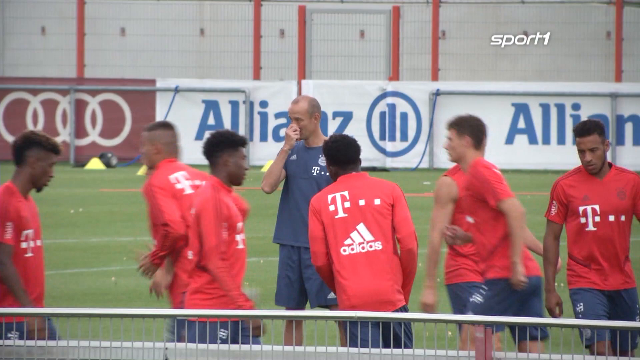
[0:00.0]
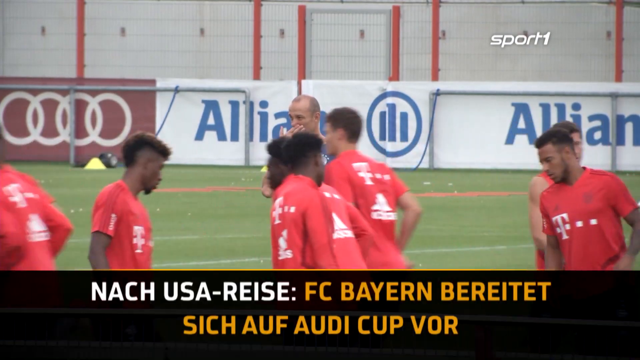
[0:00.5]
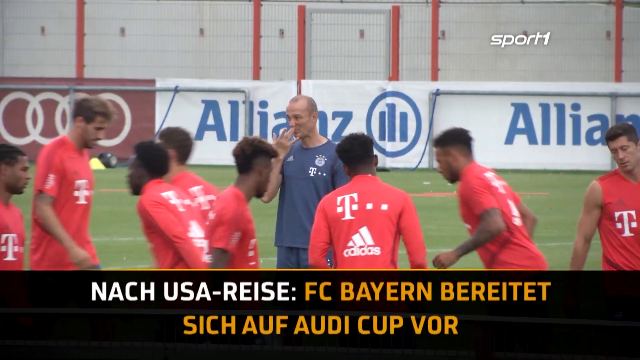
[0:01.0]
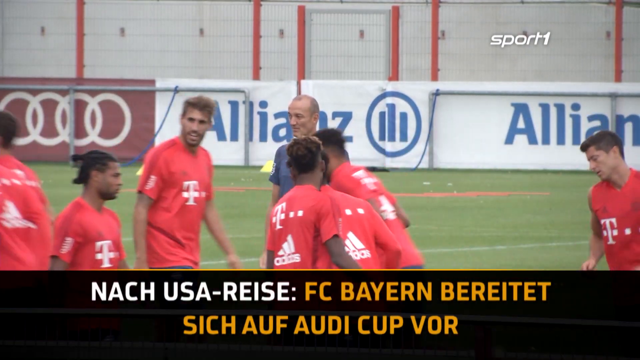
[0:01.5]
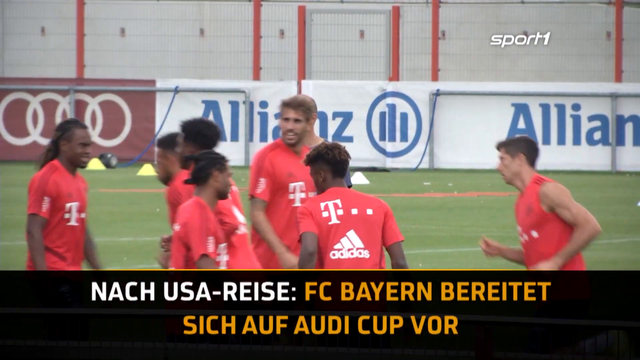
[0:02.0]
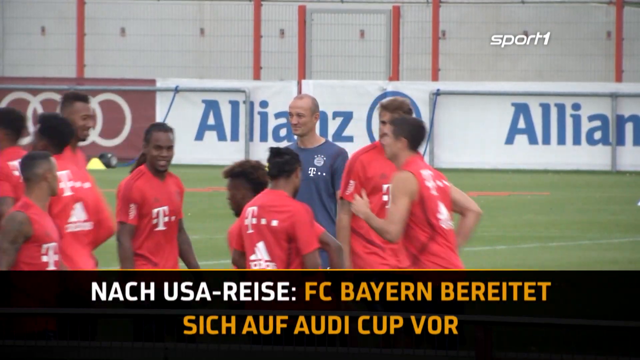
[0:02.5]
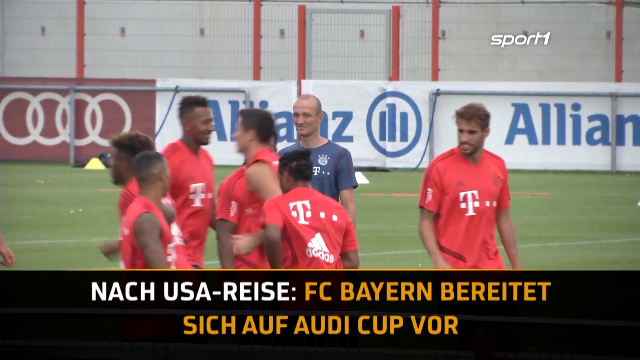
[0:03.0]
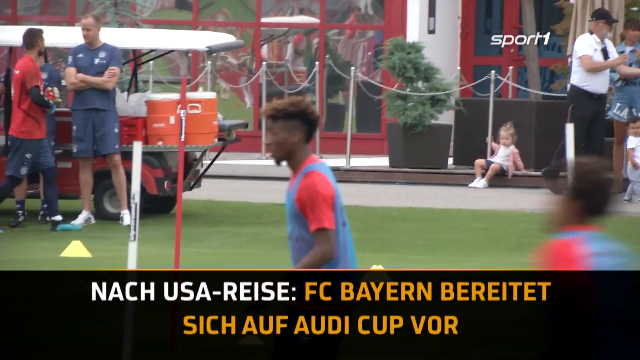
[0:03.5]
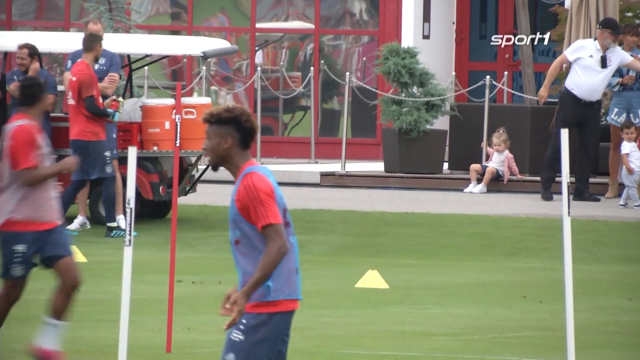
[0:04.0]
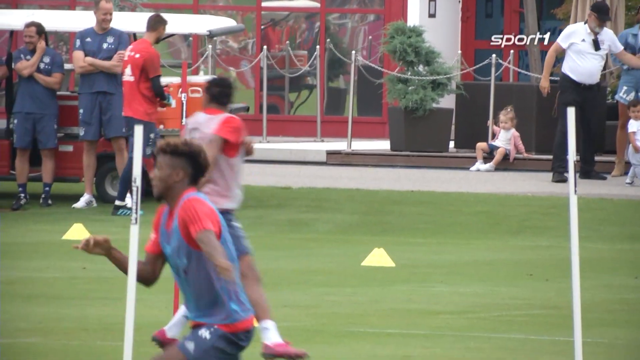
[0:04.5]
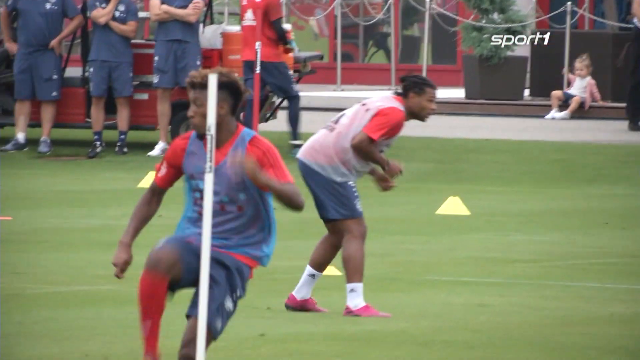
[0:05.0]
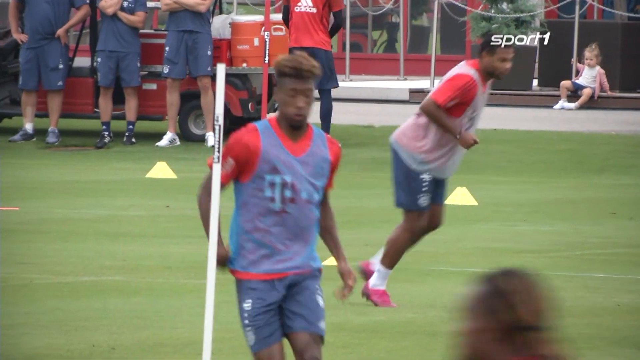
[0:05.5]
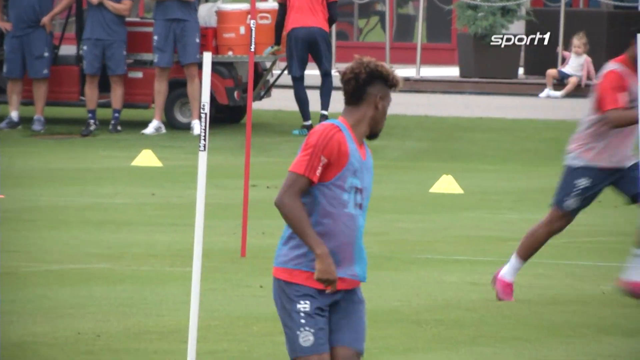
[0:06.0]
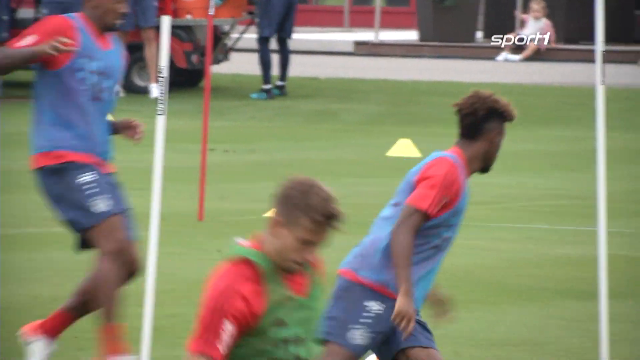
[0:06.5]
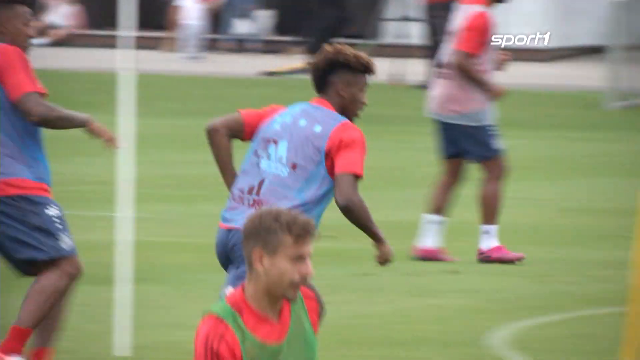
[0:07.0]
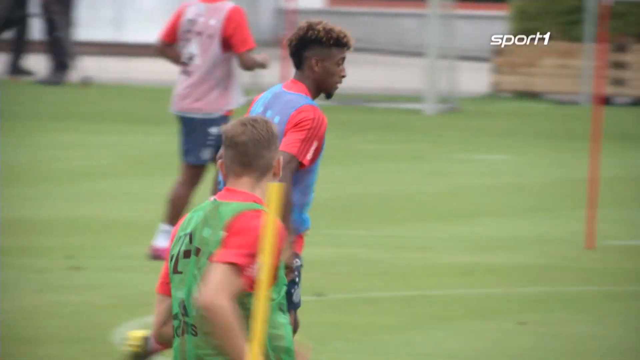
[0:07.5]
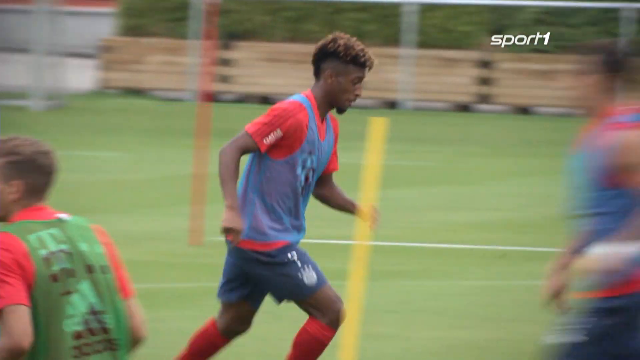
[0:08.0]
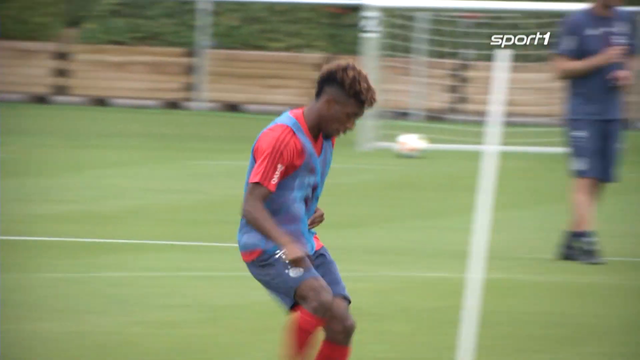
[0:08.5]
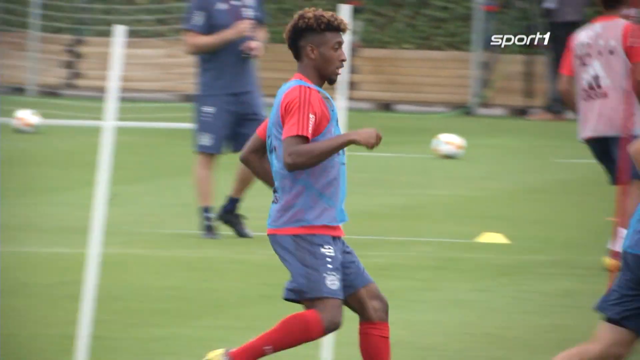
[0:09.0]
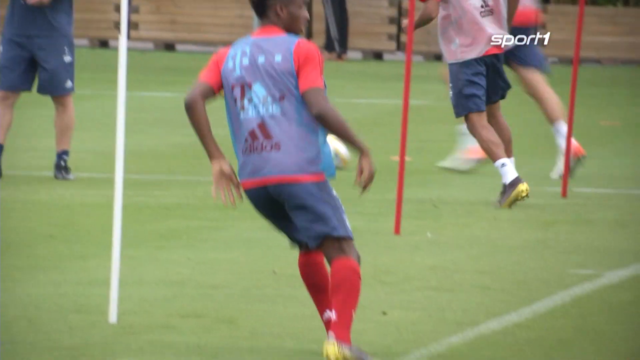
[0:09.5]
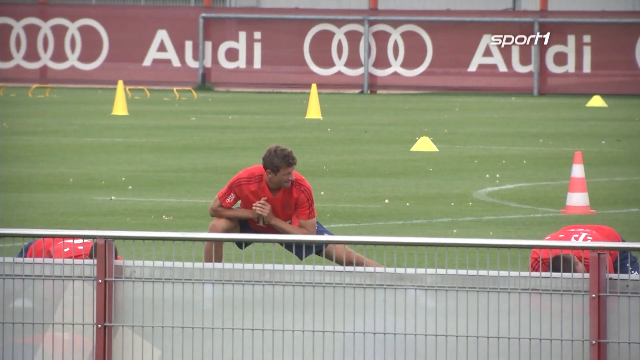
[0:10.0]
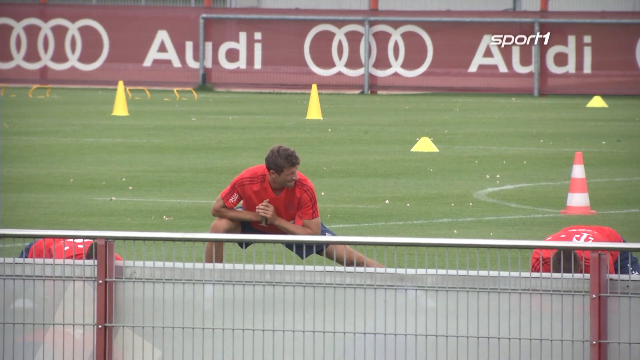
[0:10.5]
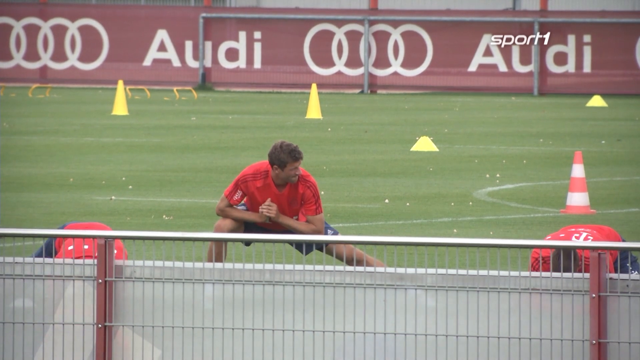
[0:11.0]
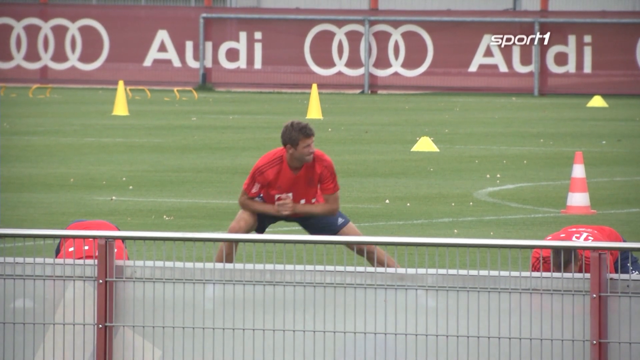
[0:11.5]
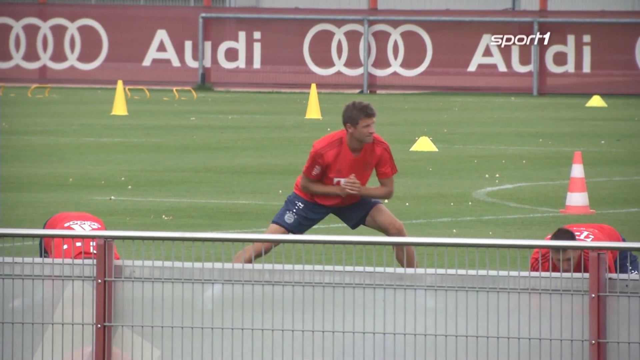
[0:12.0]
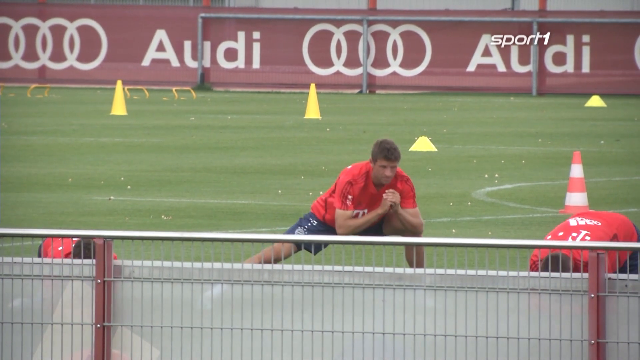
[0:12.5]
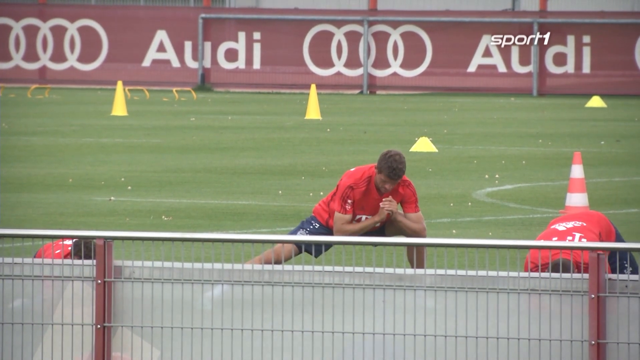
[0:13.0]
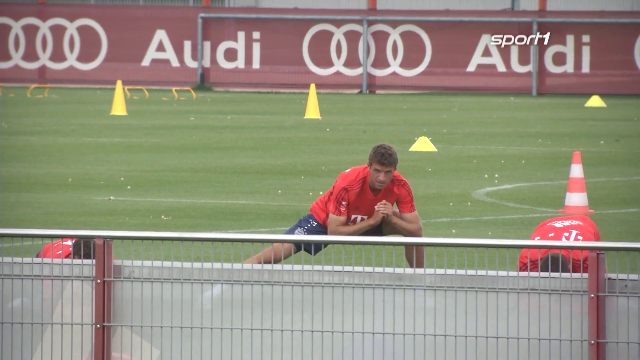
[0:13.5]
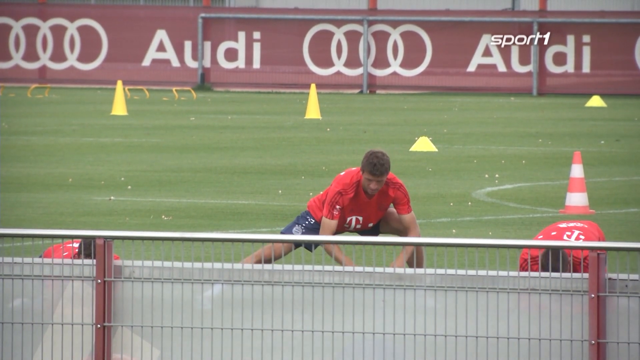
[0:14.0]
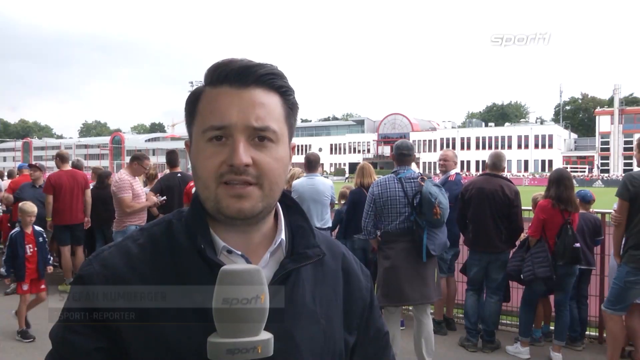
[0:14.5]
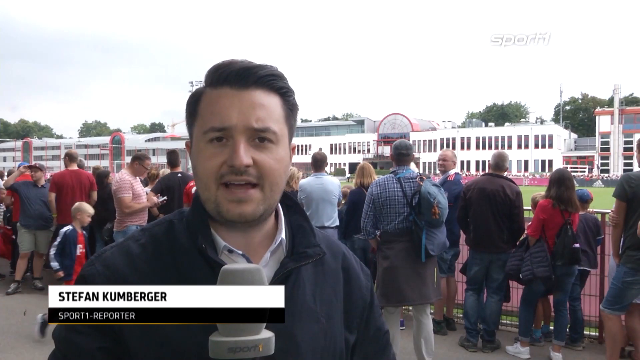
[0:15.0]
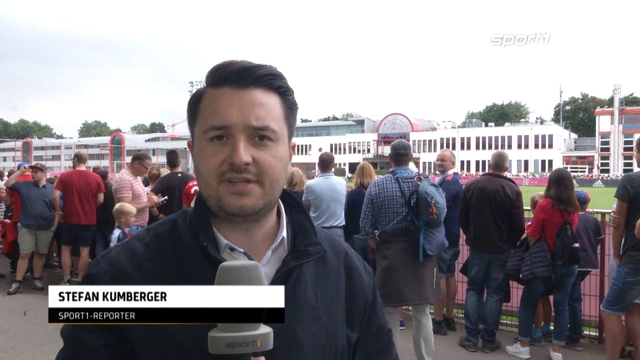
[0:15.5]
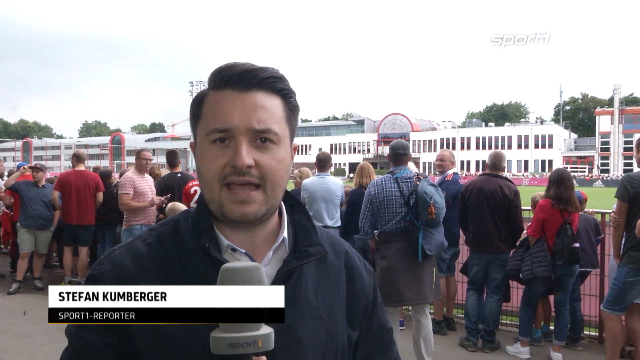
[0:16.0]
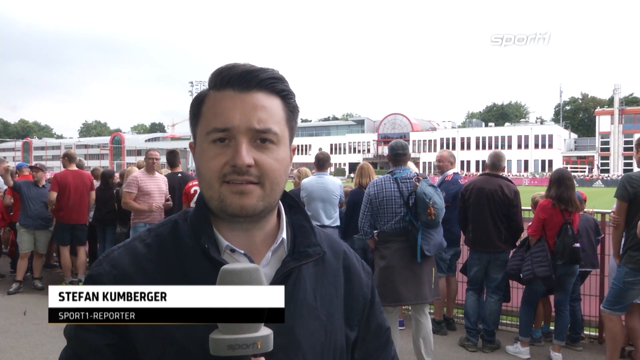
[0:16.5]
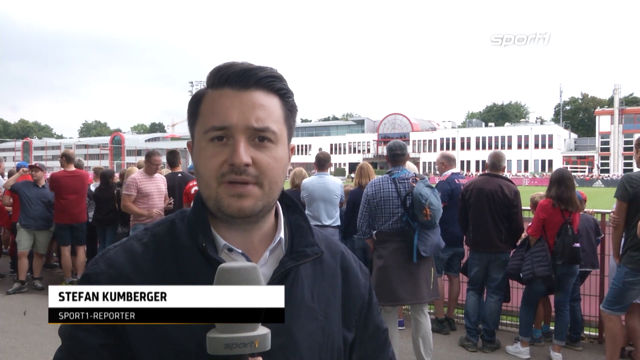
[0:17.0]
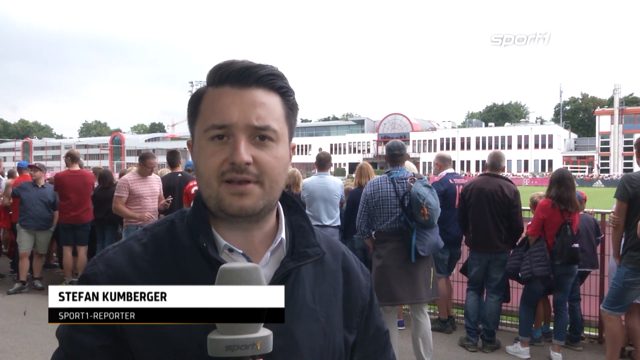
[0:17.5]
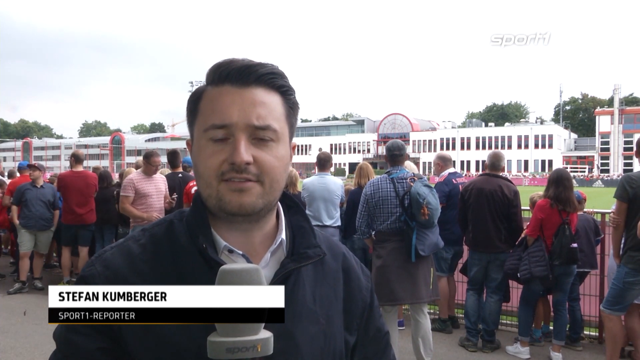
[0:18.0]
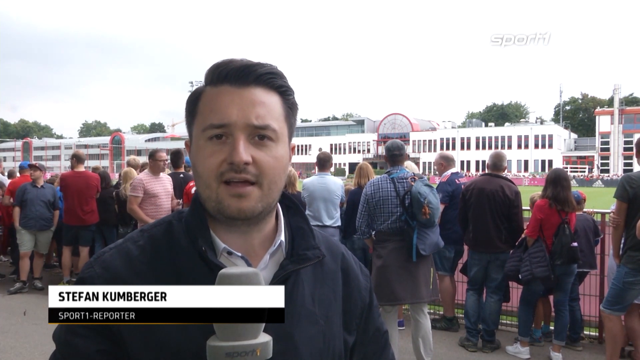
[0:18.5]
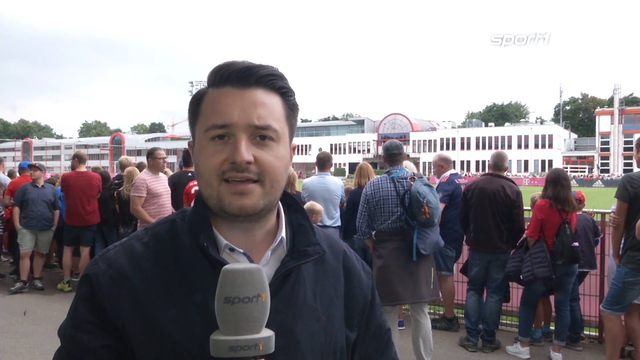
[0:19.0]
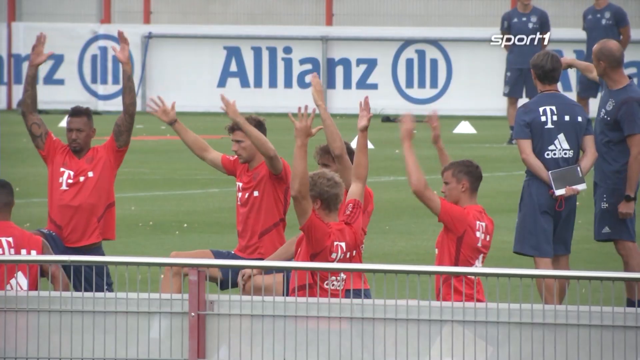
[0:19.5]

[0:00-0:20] A soccer team warms up; the players appear to have red uniforms and blue shorts. A few players stretch their hamstrings. Stefan Kumberger, a sports reporter, gives an update with a microphone, while in the background players, some in long-sleeved shirts, train. A player with a T-Mobile penny on traps the ball. A player stretches, and cones are on the field in the background. Players in red lift their arms up. The coaches appear to be in blue T-shirts. Players run back and forth. A little girl watches from the sidelines, and some fans are there. A red and white cone is in the background with other red cones. Many fans stand behind the reporter watching the warm-ups. The players jog, trap the ball, run around white and yellow sticks and stretch. "Sport 1" appears at the top of the screen, and there is a white building in the background.